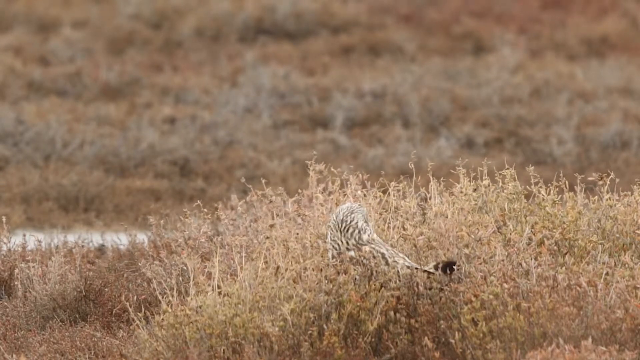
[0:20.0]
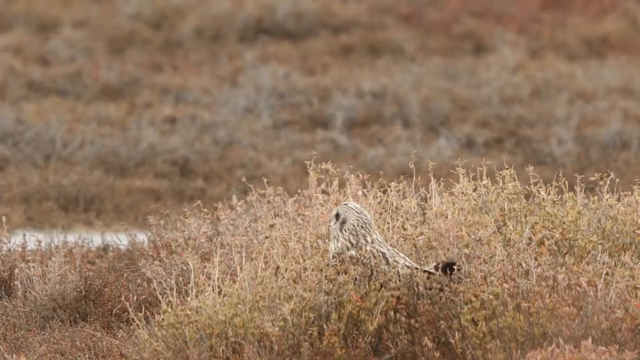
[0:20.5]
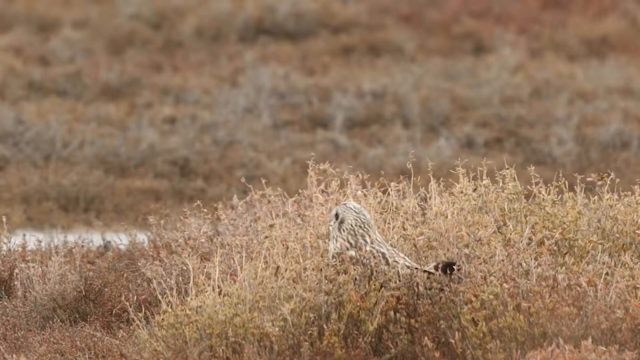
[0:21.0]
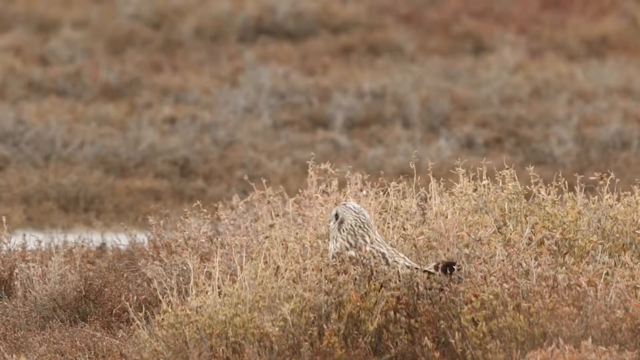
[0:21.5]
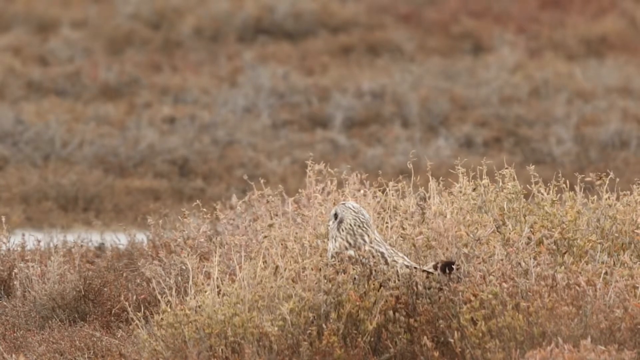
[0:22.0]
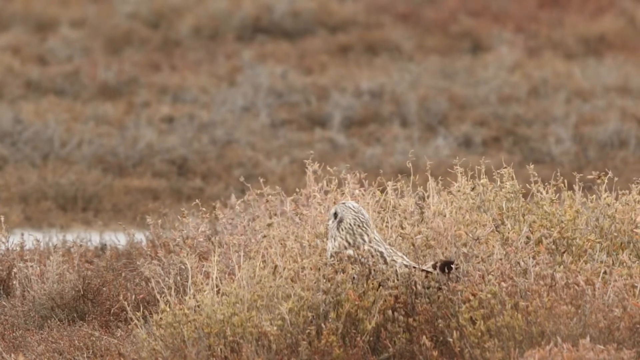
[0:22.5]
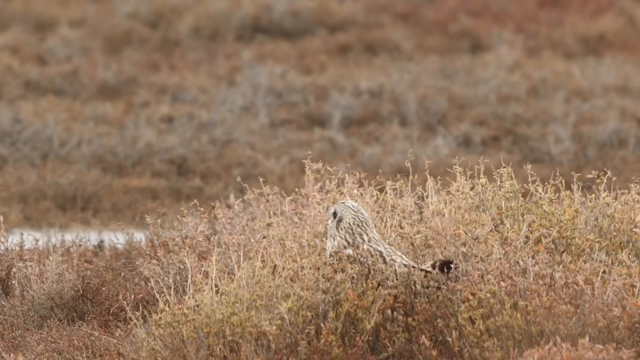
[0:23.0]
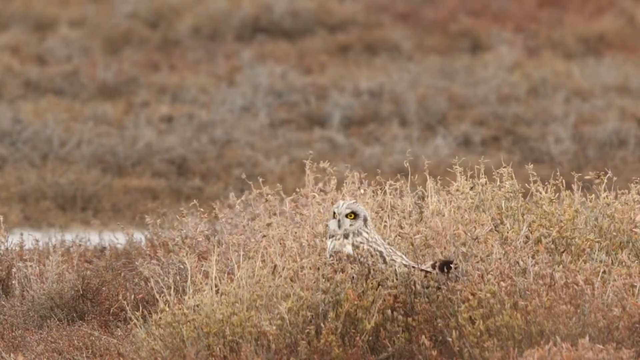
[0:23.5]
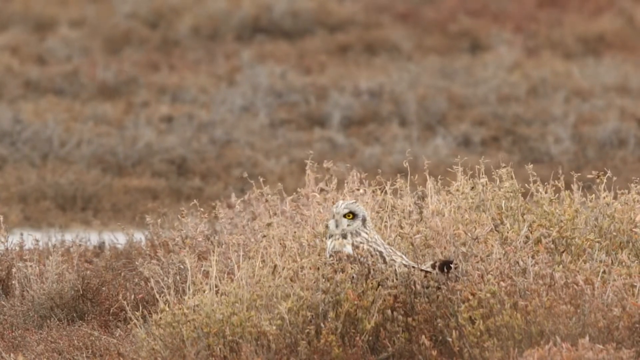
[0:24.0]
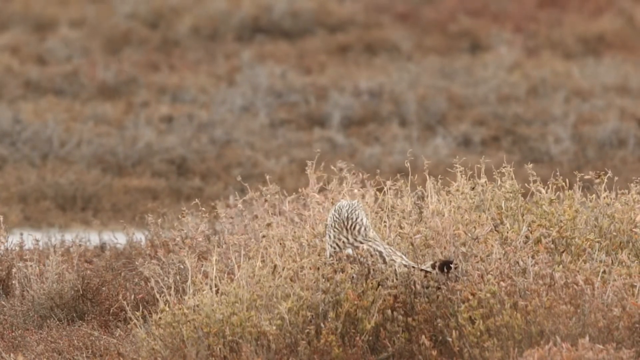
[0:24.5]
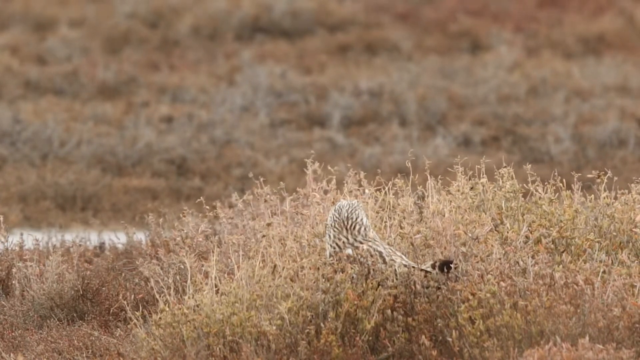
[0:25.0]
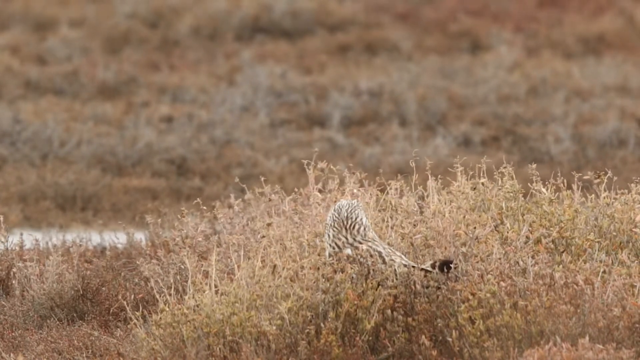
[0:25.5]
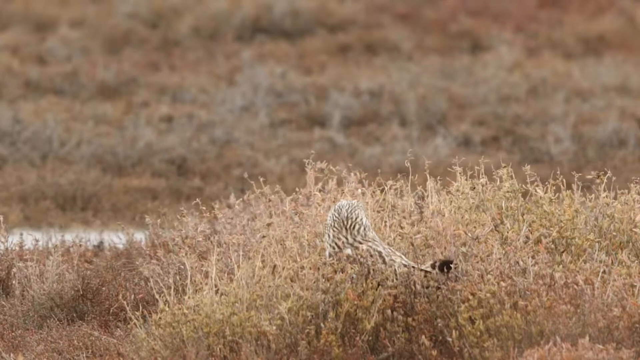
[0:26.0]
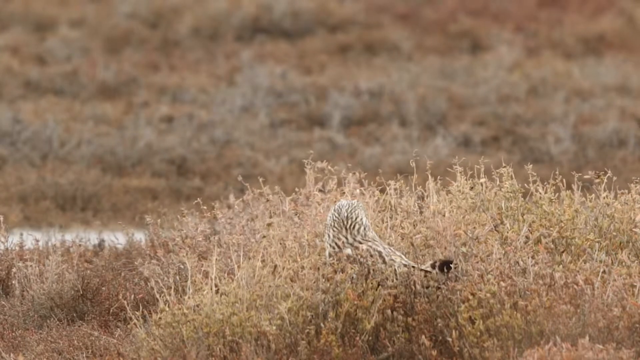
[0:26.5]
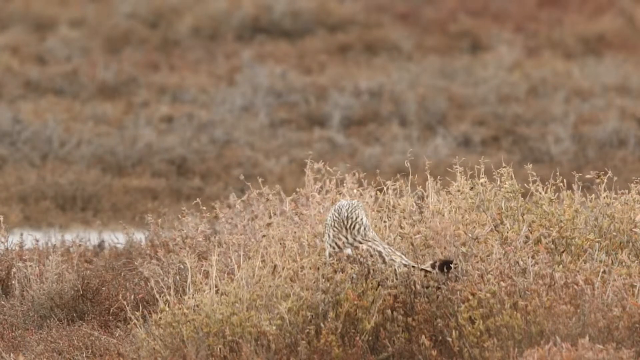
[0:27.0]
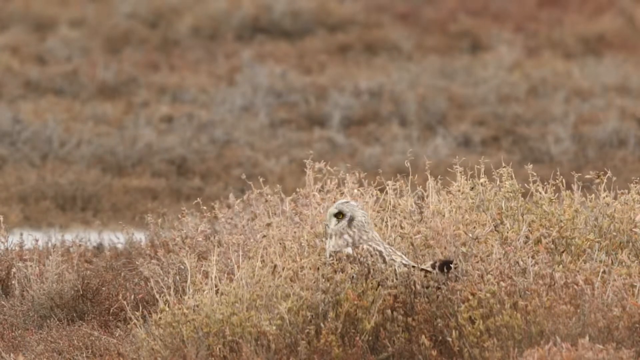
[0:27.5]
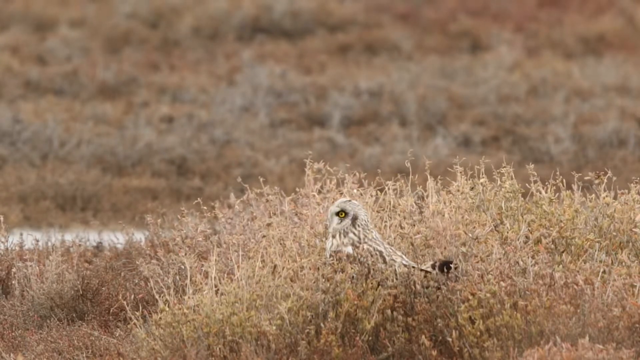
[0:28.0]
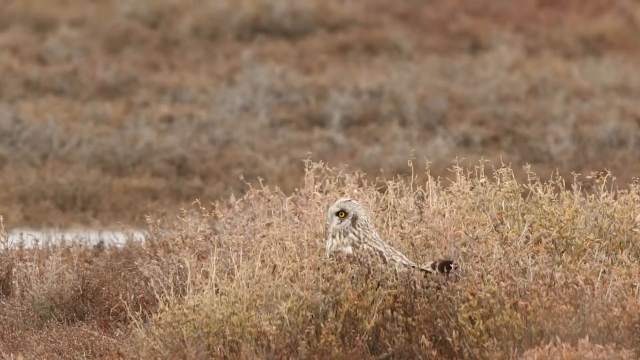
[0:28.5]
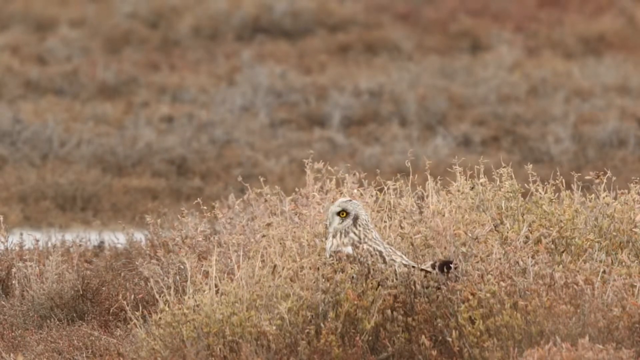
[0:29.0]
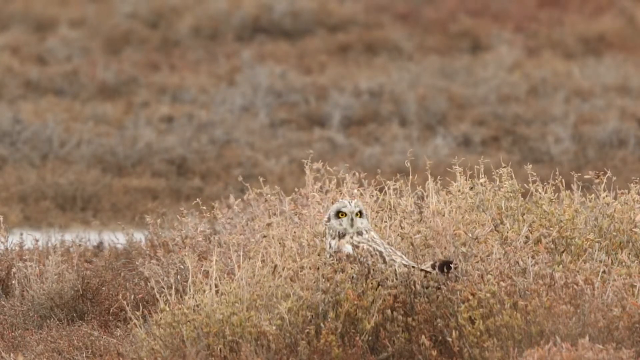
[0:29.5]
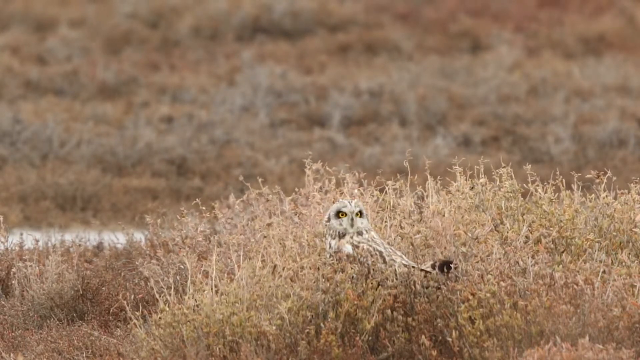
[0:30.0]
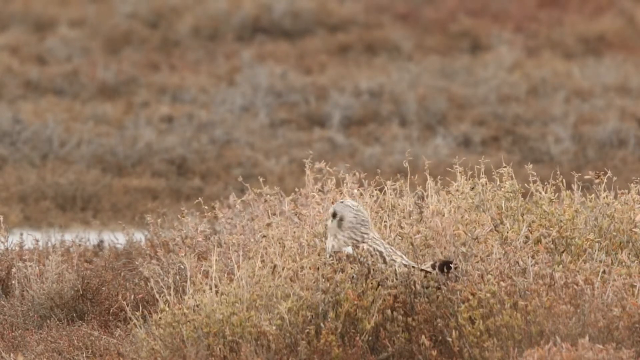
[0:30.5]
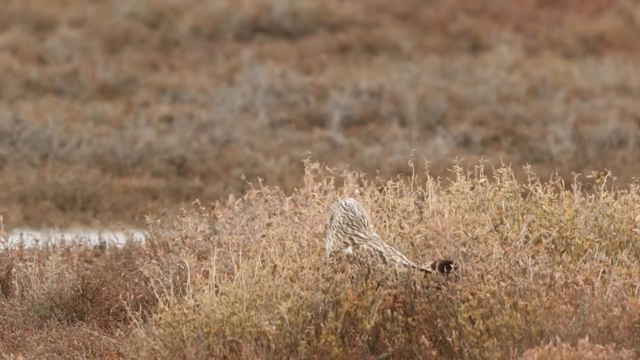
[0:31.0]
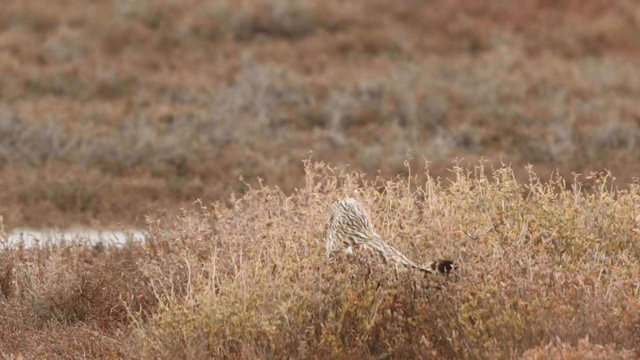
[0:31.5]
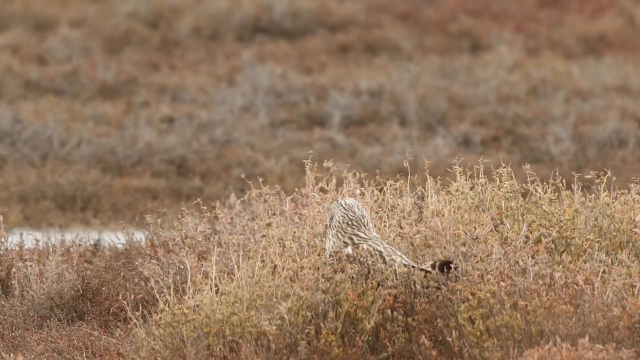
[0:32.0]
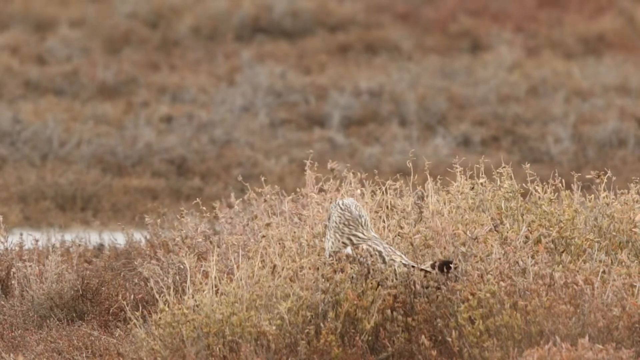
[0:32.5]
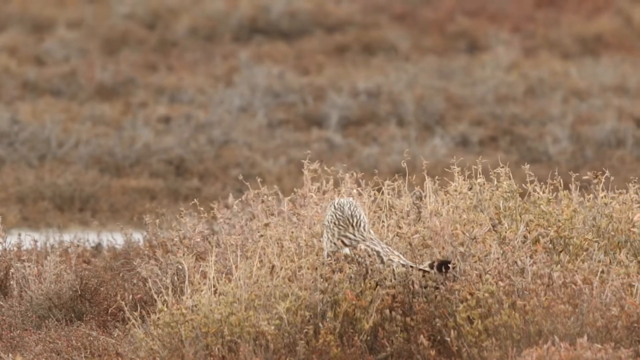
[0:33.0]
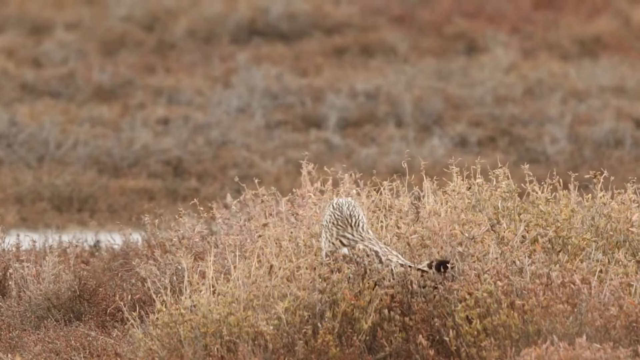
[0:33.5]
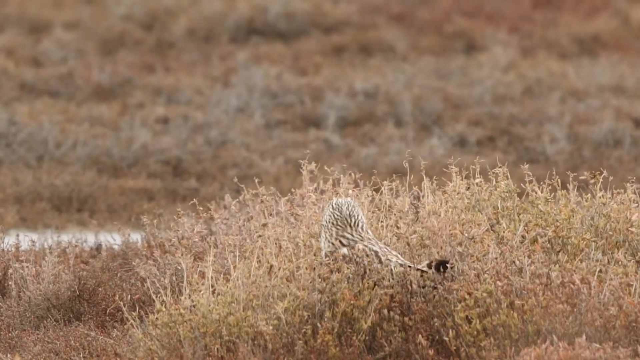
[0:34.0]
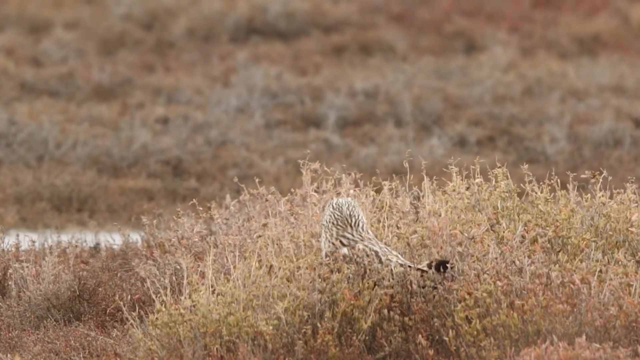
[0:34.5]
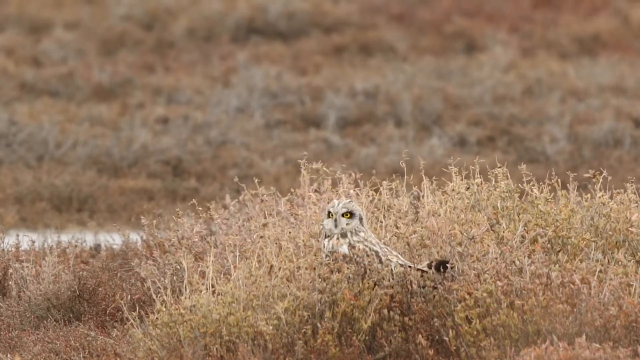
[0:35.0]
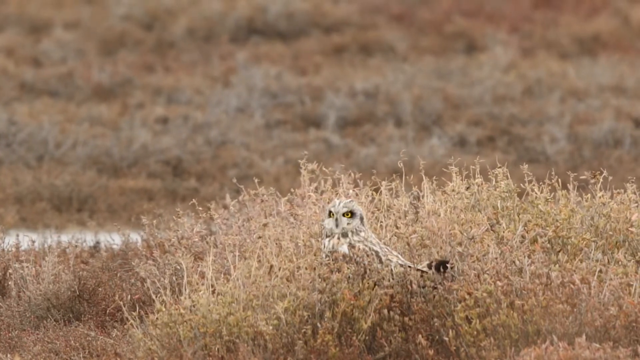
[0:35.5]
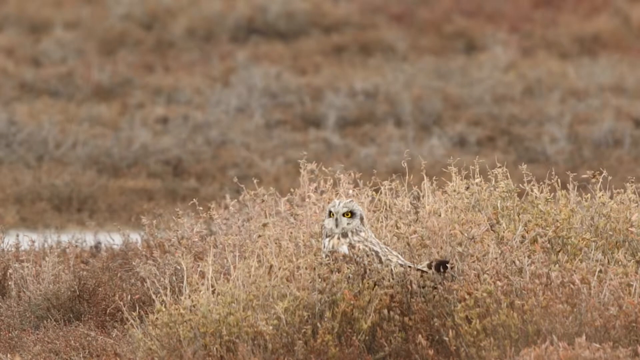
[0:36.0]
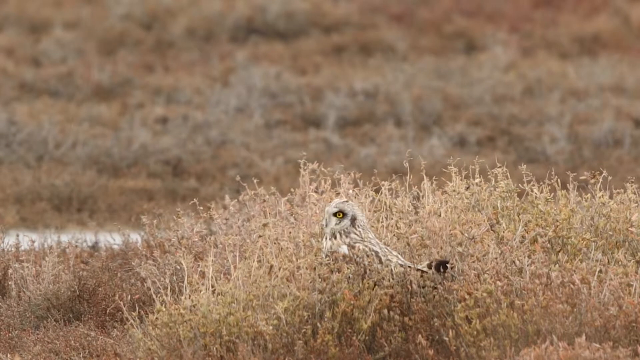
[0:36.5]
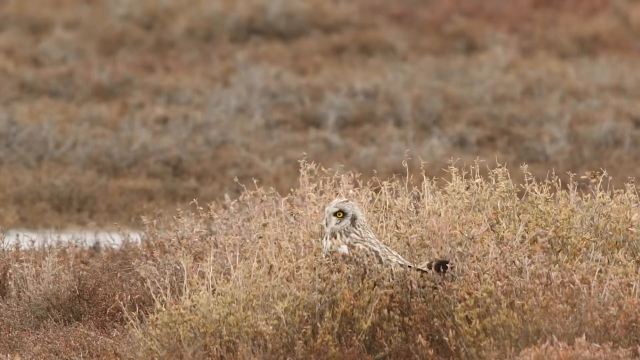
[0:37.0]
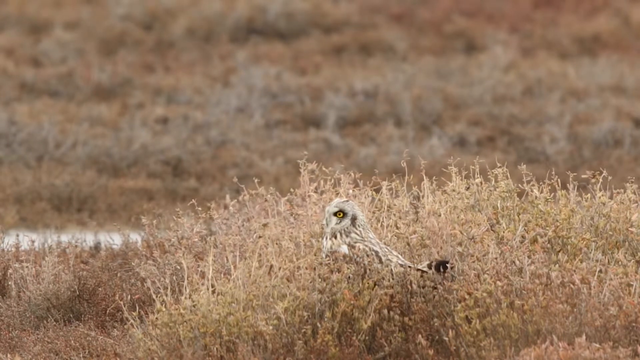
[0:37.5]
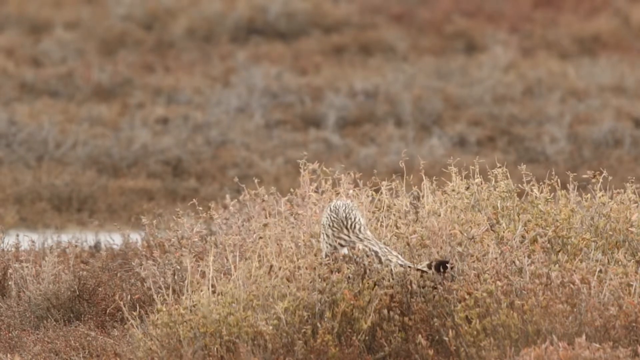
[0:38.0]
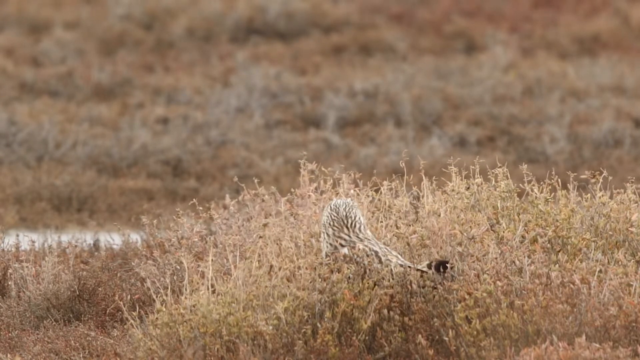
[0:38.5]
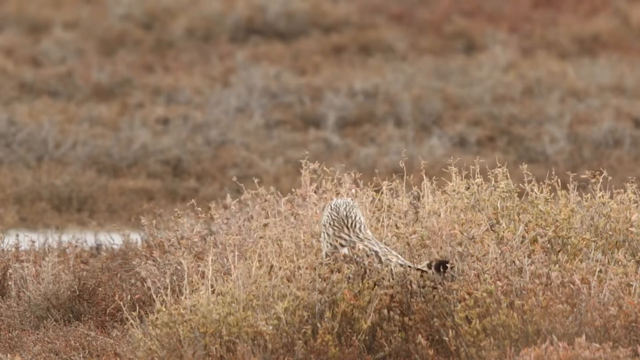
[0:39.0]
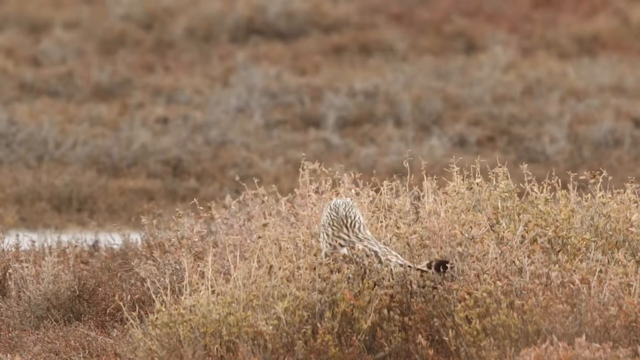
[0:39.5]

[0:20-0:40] The bird, an owl, continues to move its head back and forth. It rotates its head all the way toward the viewer and then turns it all the way to the right, showing a very wide range of rotation. Its eyes are yellow, and its beak area seems to move slightly as it turns back to look at the viewer. The owl is on the ground on very dry grass that is almost a light gray, light yellowish color, mostly light gray and light brown. More dry grass is visible in the distance as the owl keeps looking around at its surroundings. The tip of its tail is black.